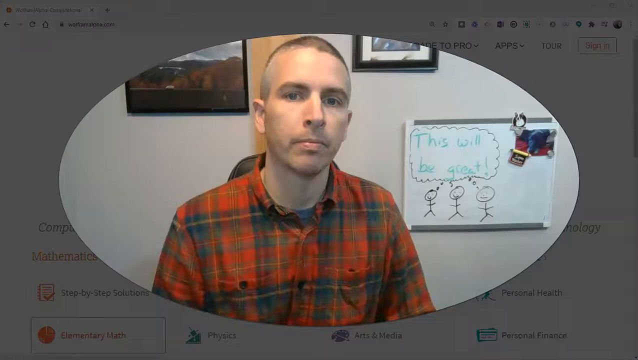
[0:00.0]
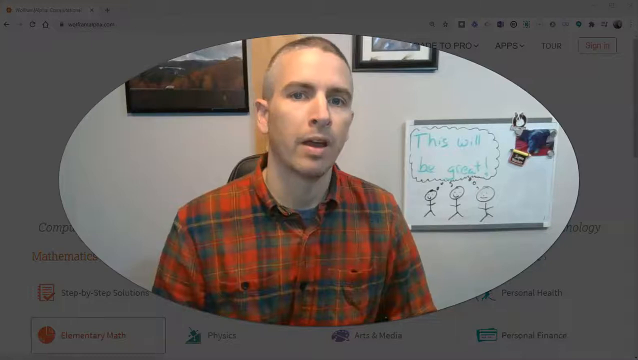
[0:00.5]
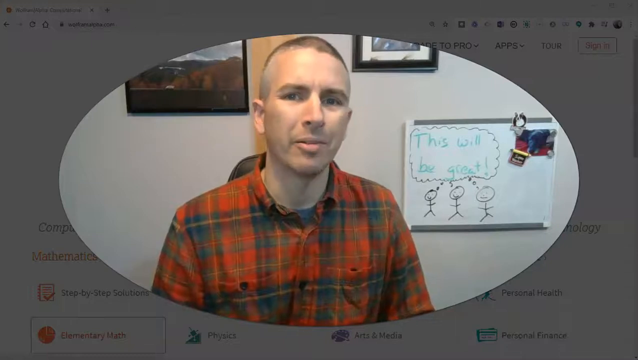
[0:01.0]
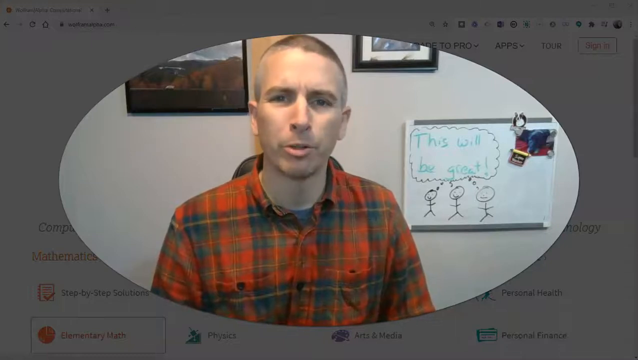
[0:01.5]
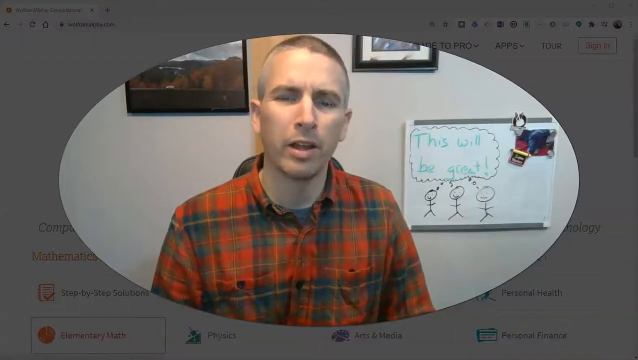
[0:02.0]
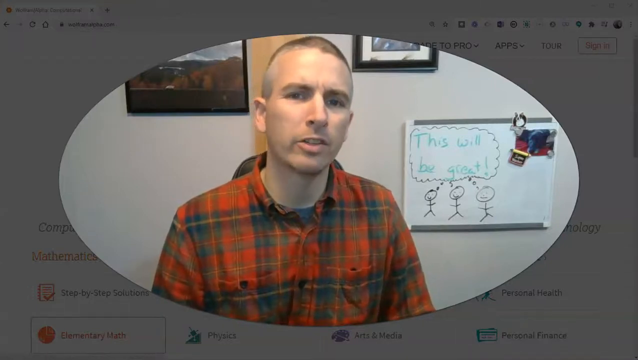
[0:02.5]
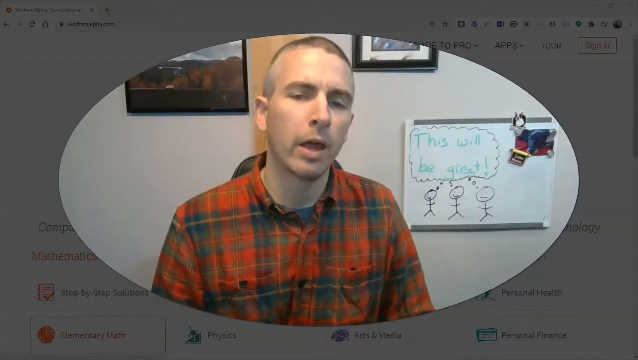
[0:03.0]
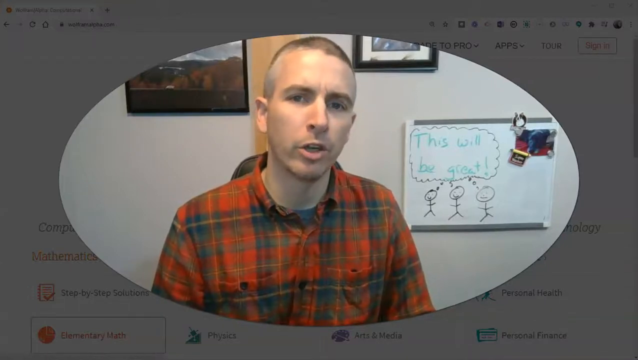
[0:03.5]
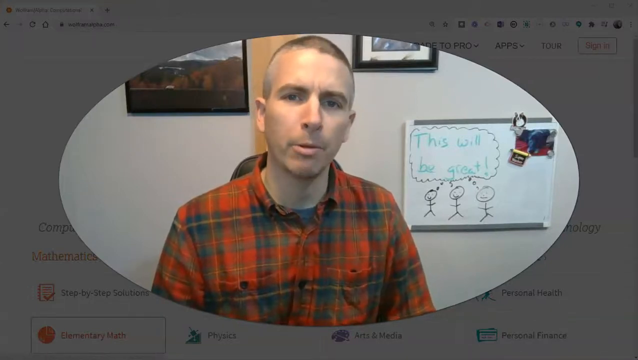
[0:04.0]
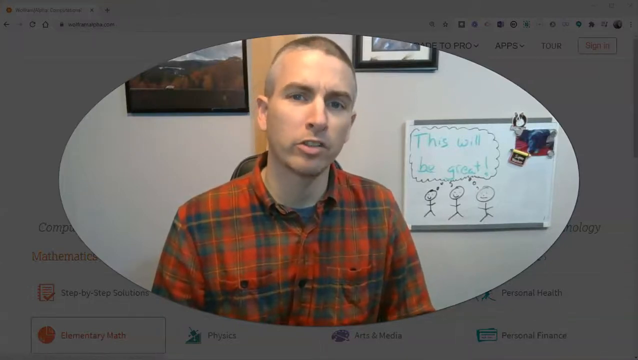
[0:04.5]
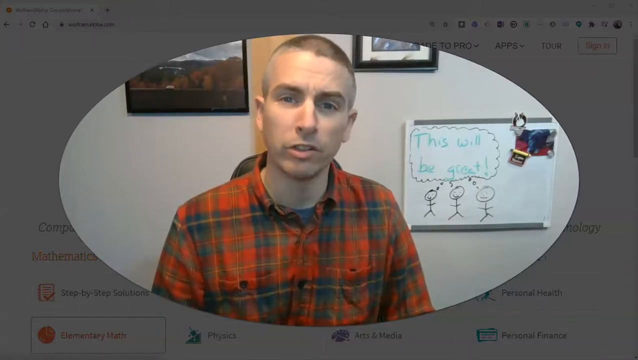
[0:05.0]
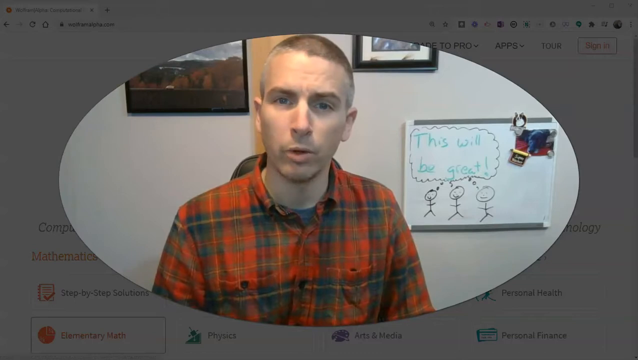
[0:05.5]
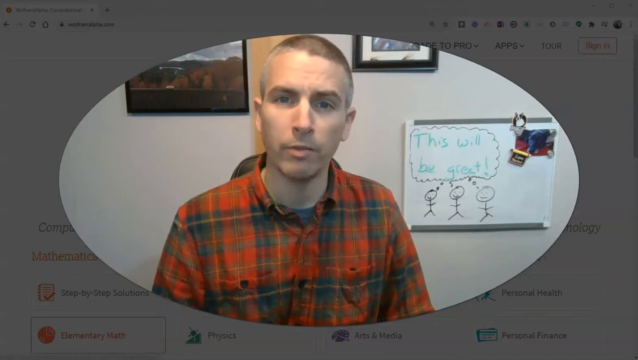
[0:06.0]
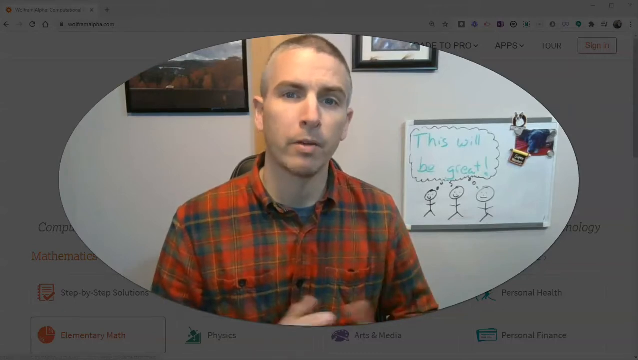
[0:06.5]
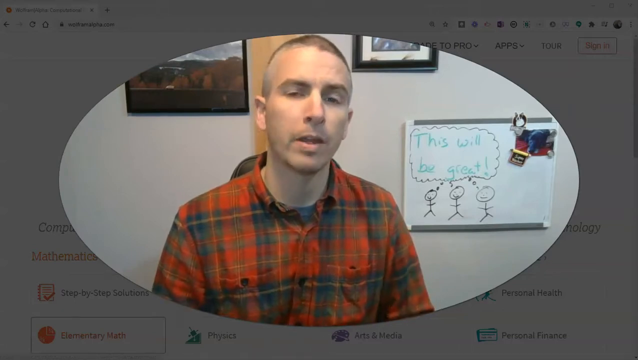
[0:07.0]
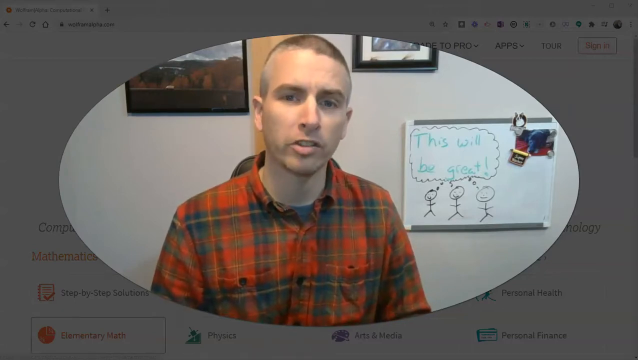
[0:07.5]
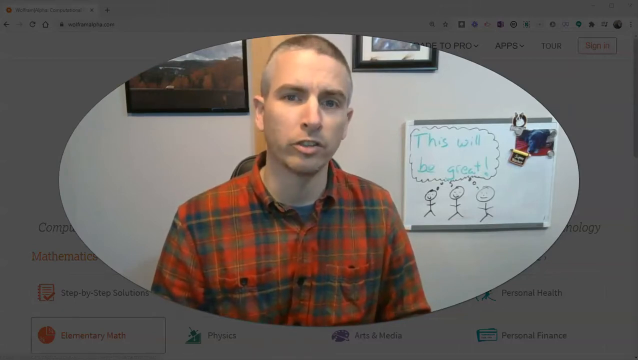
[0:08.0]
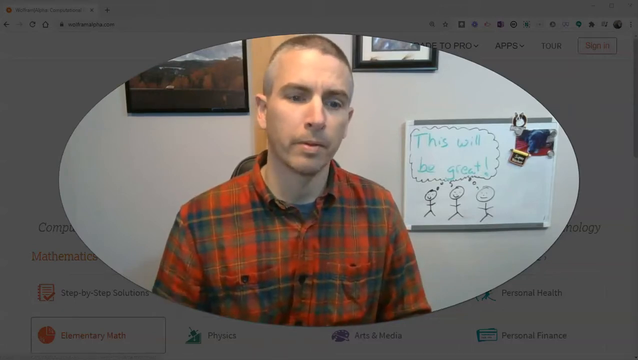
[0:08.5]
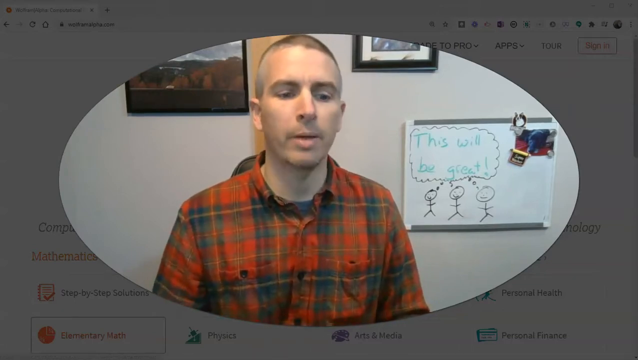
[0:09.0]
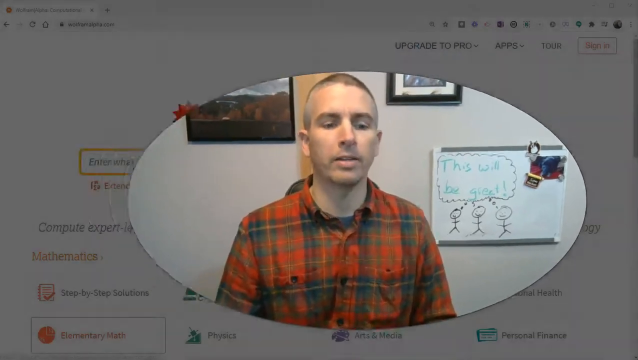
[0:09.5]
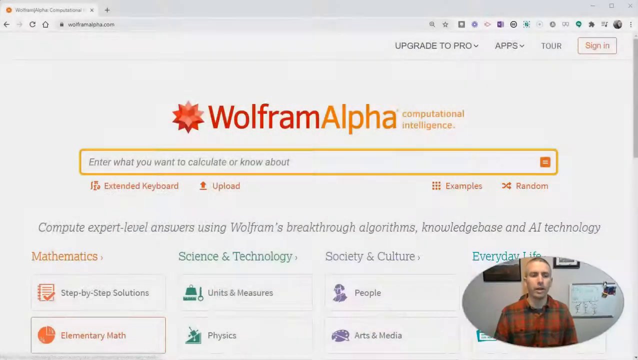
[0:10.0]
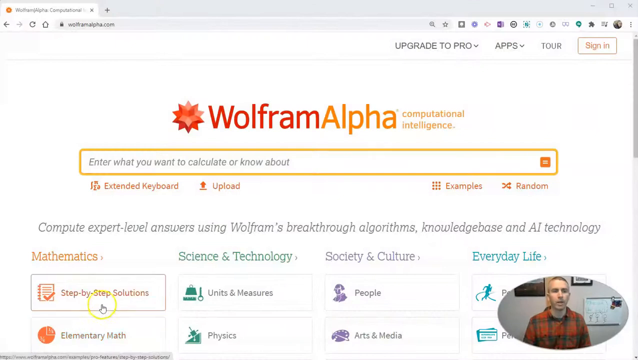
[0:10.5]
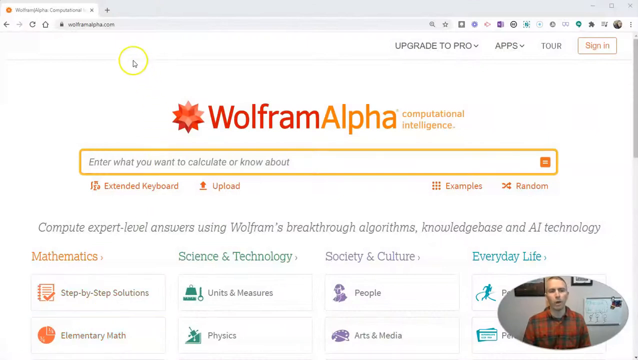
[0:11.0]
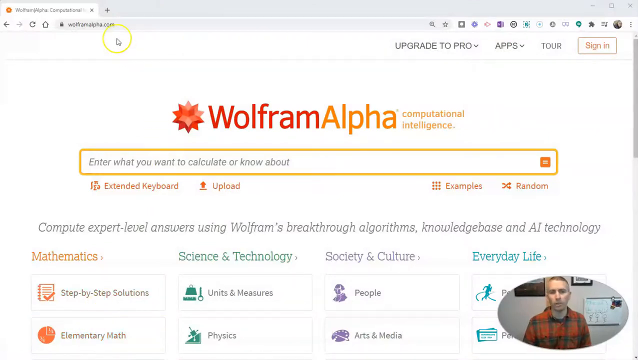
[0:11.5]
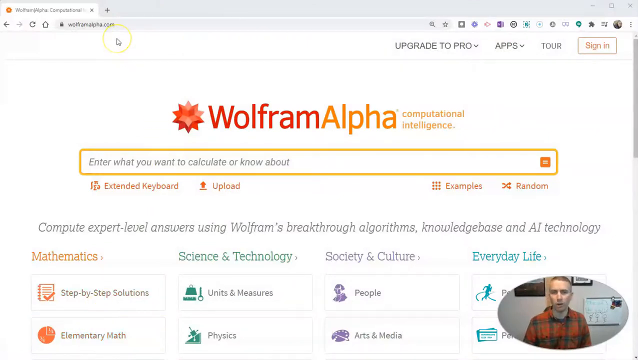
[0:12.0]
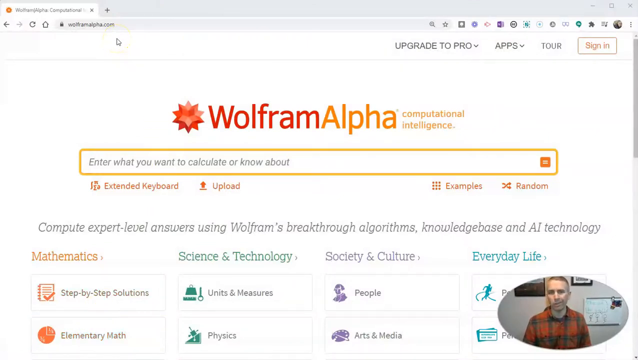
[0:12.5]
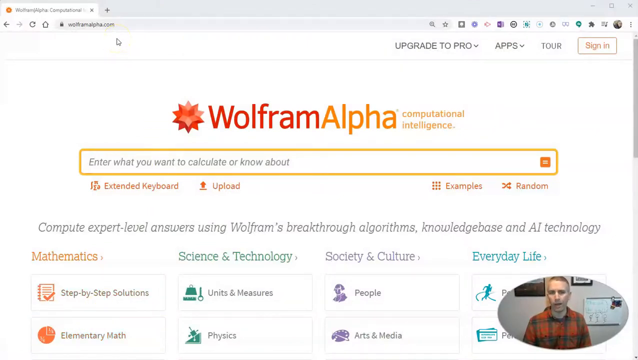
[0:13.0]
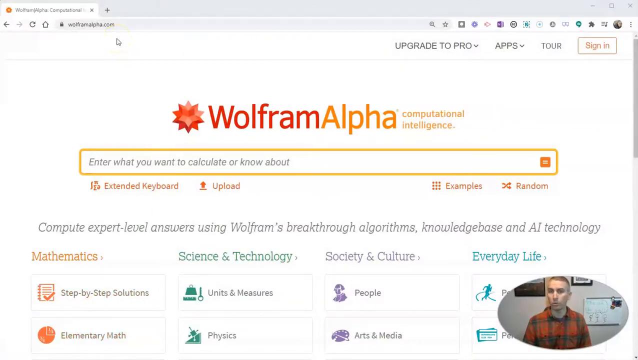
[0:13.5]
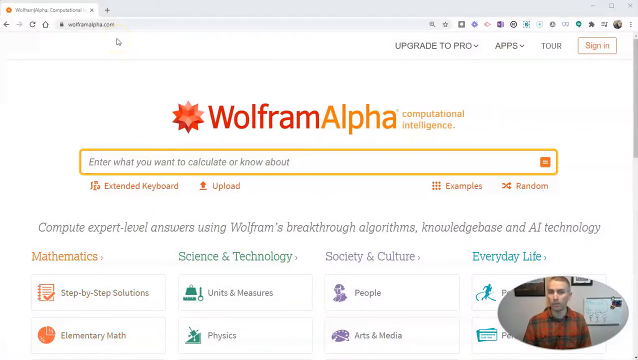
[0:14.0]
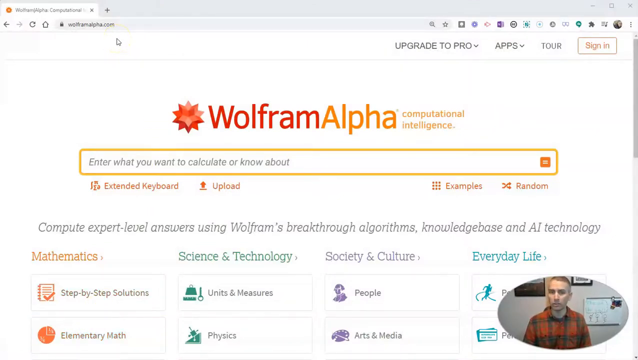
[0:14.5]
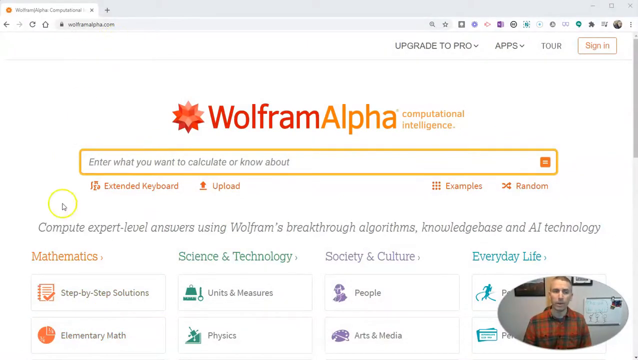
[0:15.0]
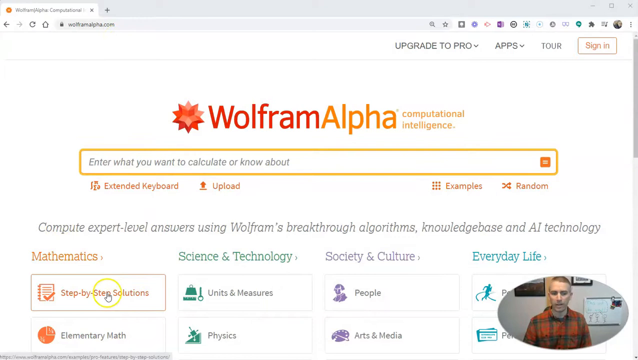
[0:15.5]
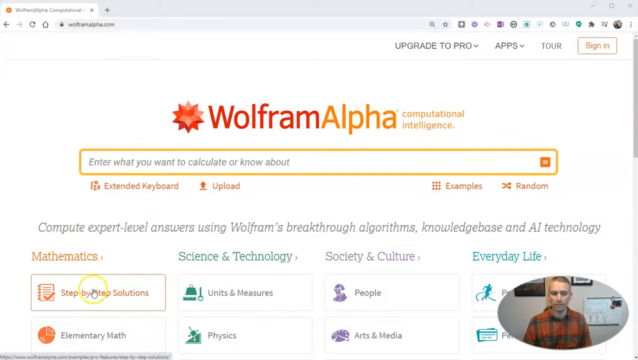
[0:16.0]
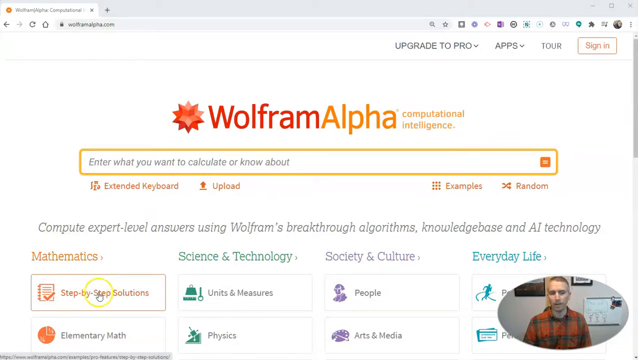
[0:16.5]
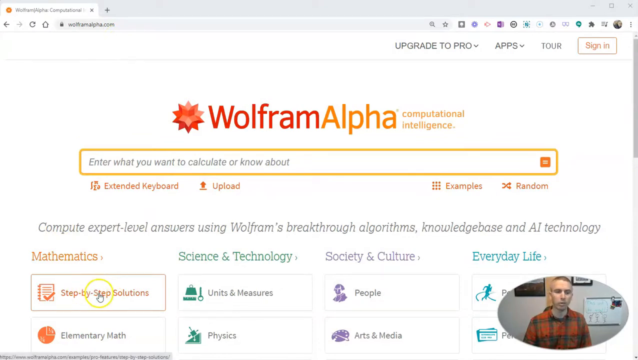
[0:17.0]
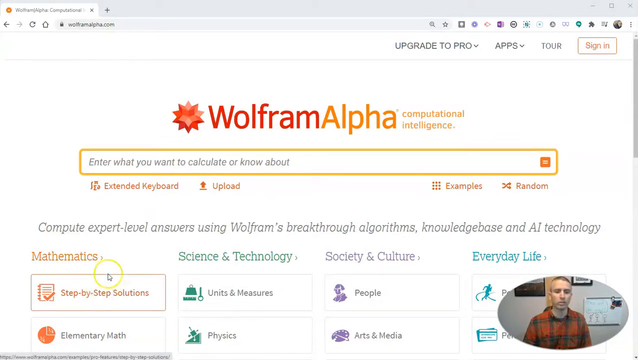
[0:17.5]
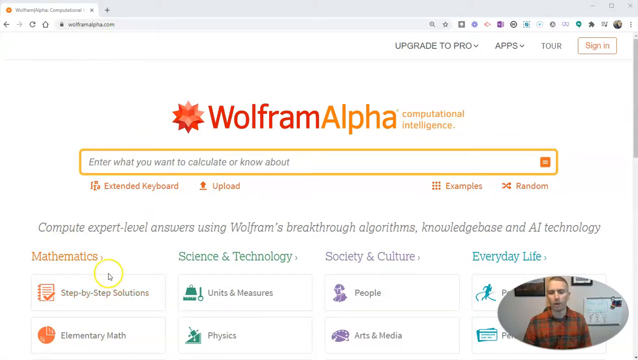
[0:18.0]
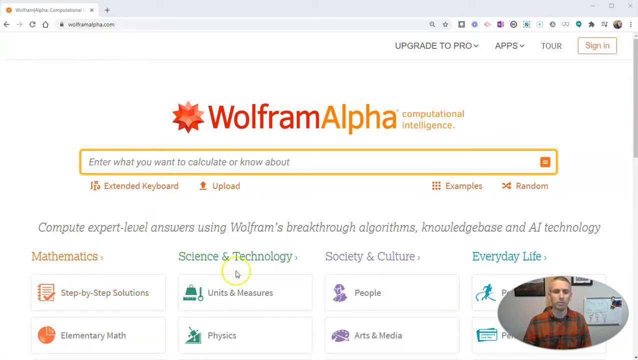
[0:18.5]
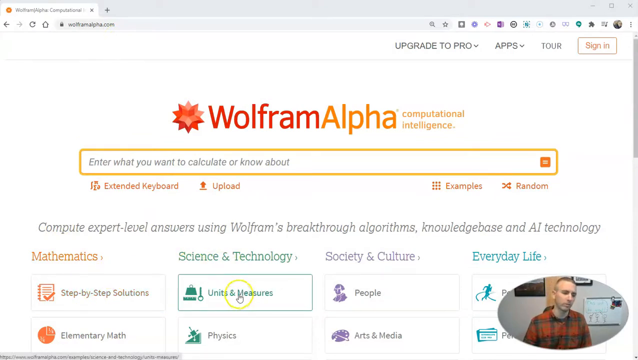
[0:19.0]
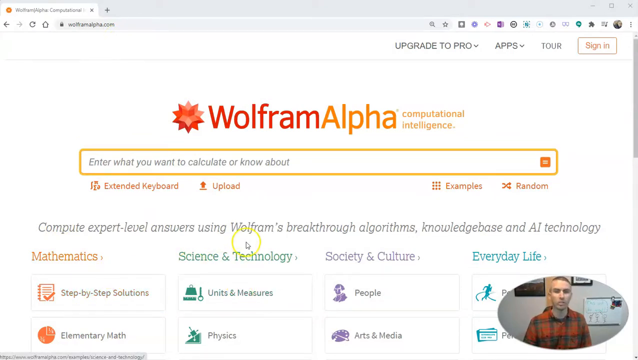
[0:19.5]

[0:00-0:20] A man talks on camera. He wears a plaid shirt and has a very low haircut. On the wall behind him is a whiteboard with a word bubble reading "this will be great" and three stick figures drawn underneath it. He then shrinks his video down into the lower right corner of the screen, so he stays visible talking in the corner while a web browser fills the space behind him, showing the Wolfram Alpha website. The mouse pointer, a finger cursor with a circle around it for high visibility, moves around the screen. It hovers over different sections of the site, first the step-by-step solutions section and then the units and measures section, and later hovers in the lower left corner of the screen.